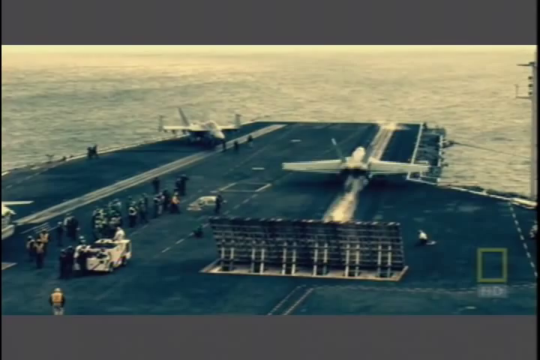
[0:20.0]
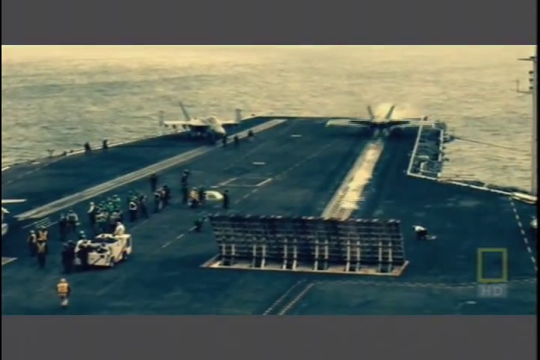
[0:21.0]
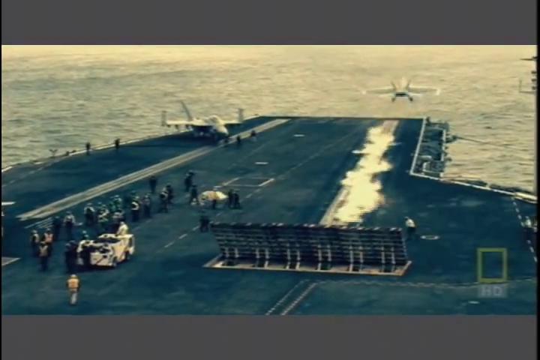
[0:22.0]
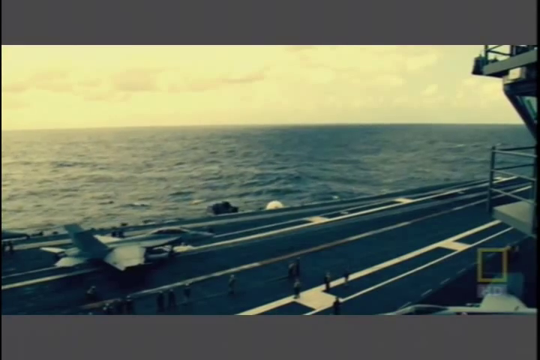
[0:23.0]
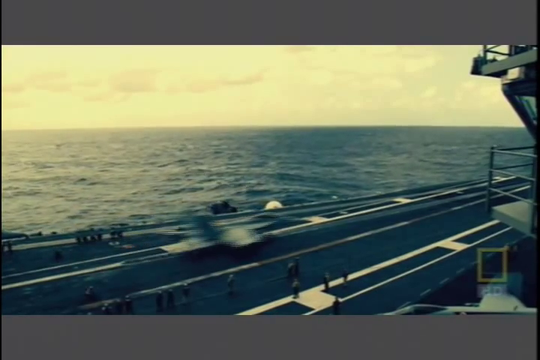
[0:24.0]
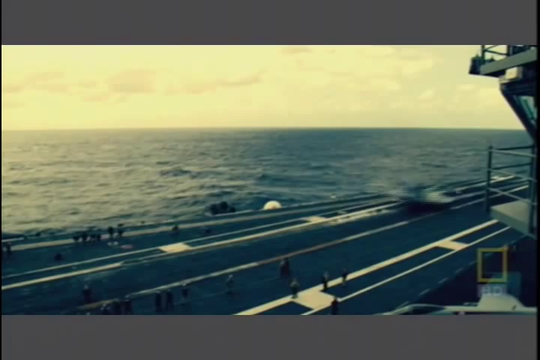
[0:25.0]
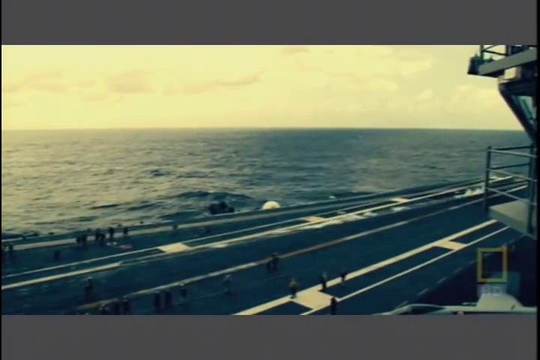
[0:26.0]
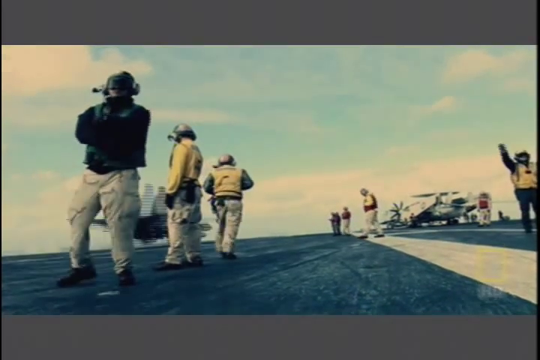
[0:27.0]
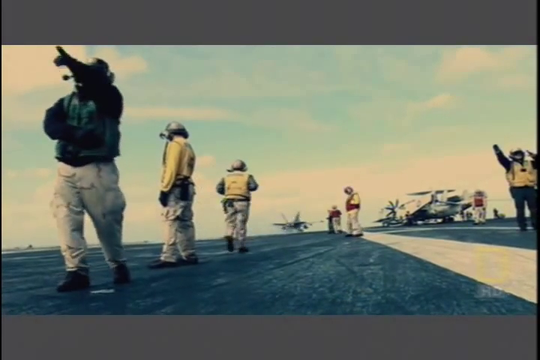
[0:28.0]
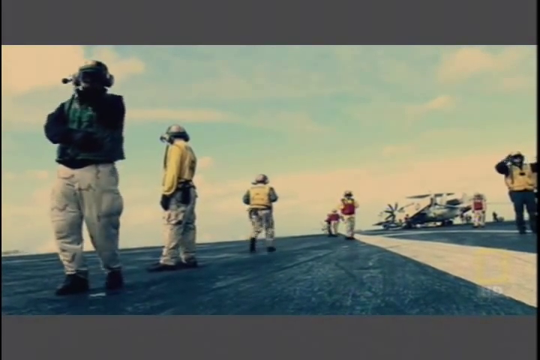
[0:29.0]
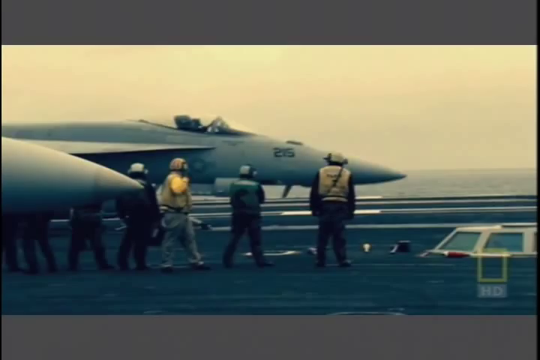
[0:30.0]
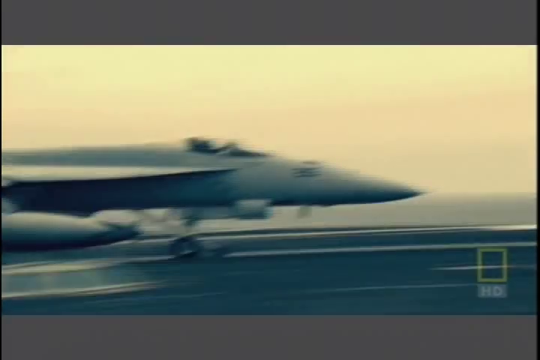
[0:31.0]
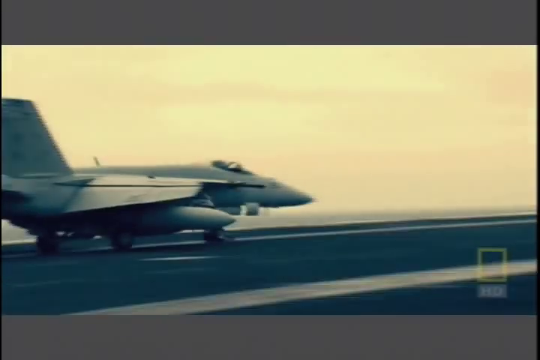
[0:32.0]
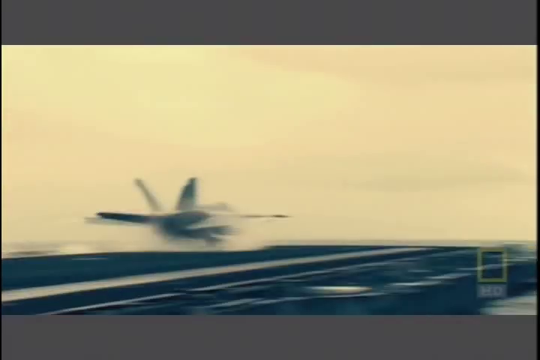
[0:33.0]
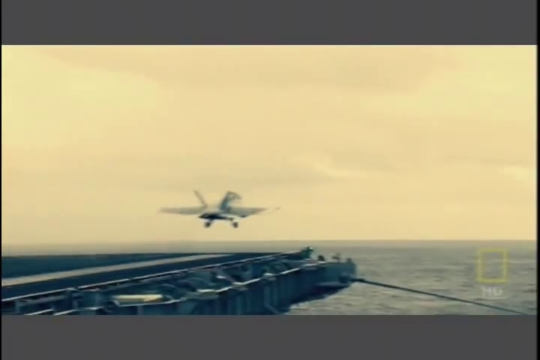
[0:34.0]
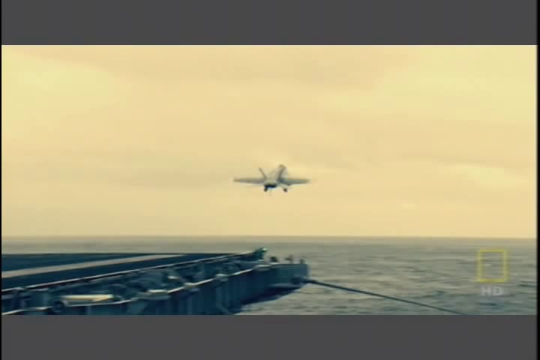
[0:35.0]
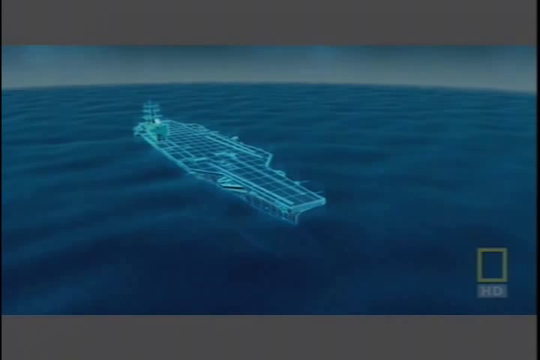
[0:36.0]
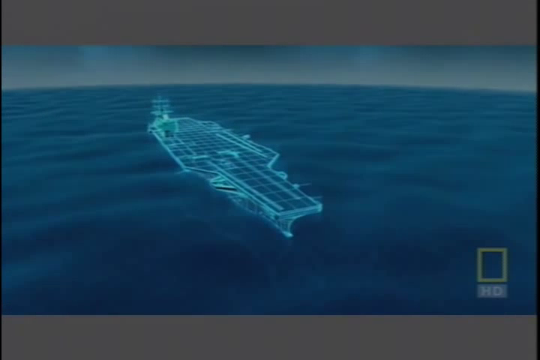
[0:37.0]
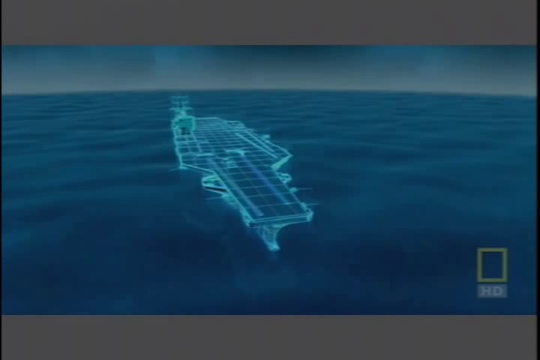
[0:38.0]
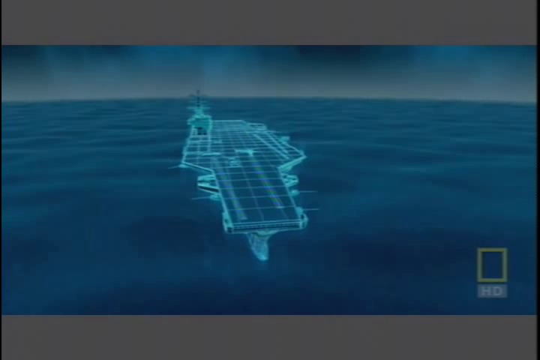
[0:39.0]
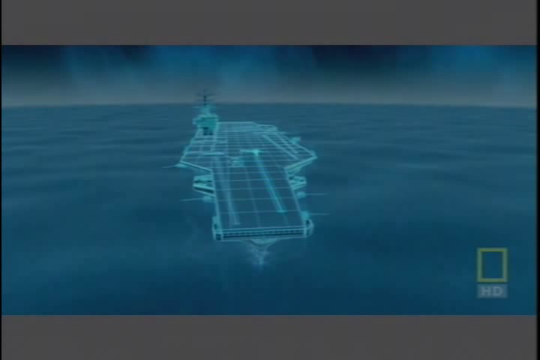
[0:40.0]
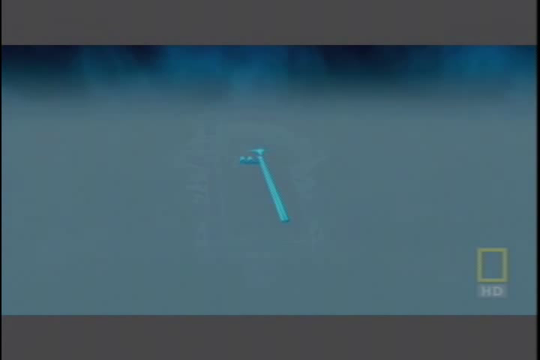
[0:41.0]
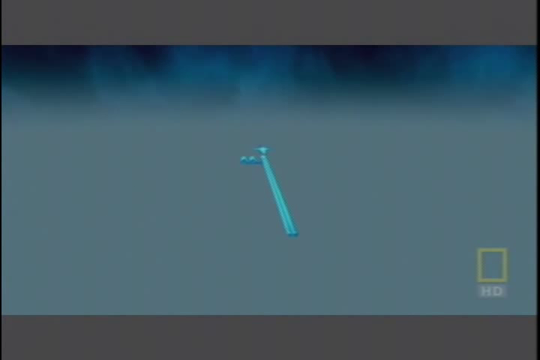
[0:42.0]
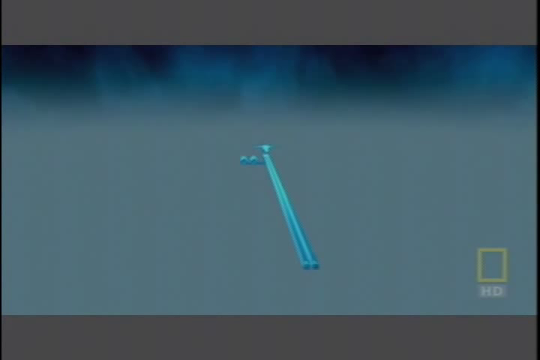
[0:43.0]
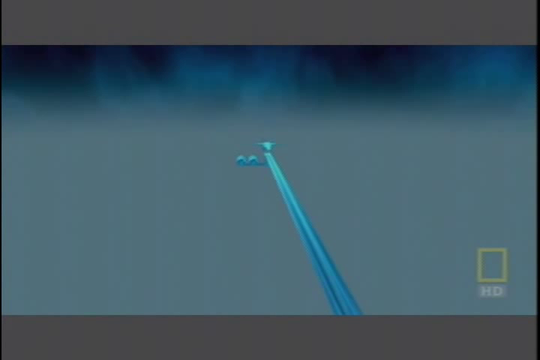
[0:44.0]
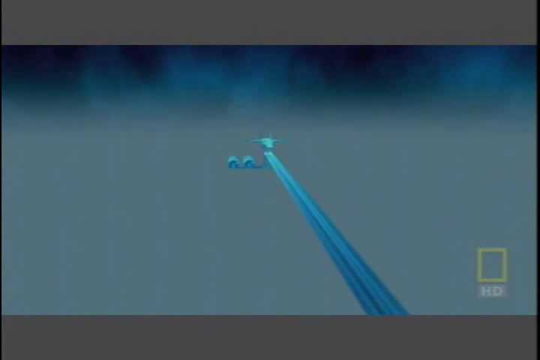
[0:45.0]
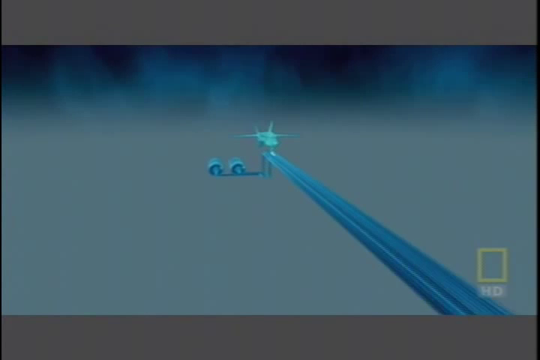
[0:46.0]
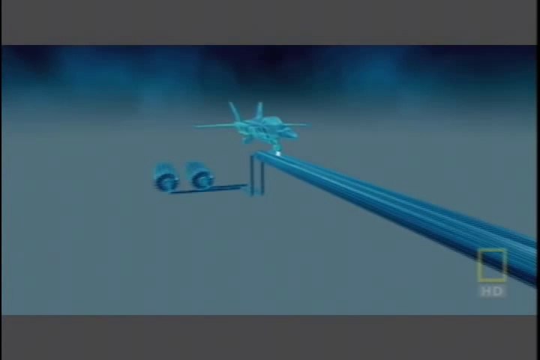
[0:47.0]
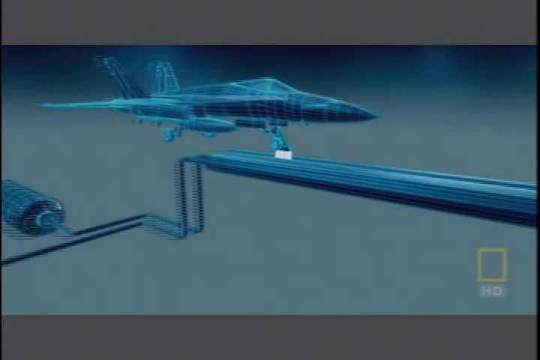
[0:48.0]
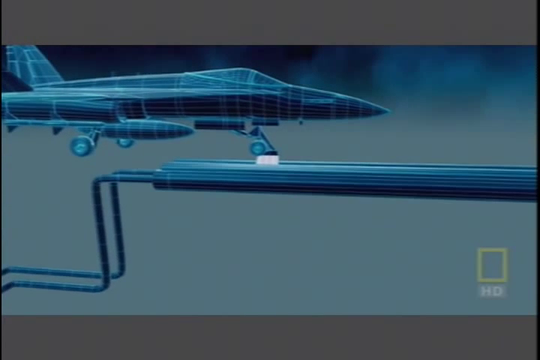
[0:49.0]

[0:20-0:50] An aircraft takes off from the right side of an aircraft carrier's deck. On the left side is another aircraft with its nose pointing toward the deck. Lots of crew in safety vests stand toward the lower left corner of the frame; they are hard to see, since the video is mostly in dull dark greys and whites, but the orange of their vests is faintly visible. They watch the aircraft take off, and then a different aircraft that looks like a fighter jet also takes off from the deck with white smoke behind it, flying past the men on the deck. A closer view shows the men on deck in long-sleeved outfits, helmets and safety vests. Another aircraft gets ready to take off with its nose pointed; seen from the side, it takes off and launches into the air. Next, a graphical illustration shows the aircraft carrier on the ocean, with its runway and a jet on it.